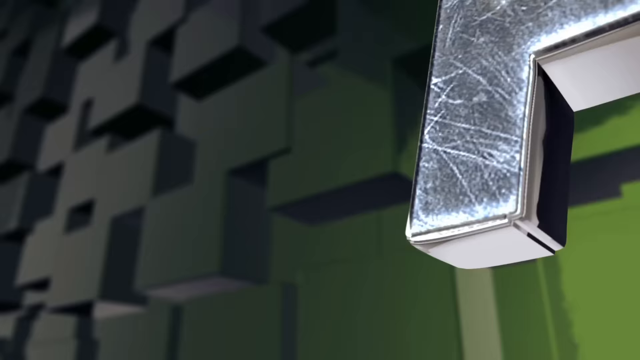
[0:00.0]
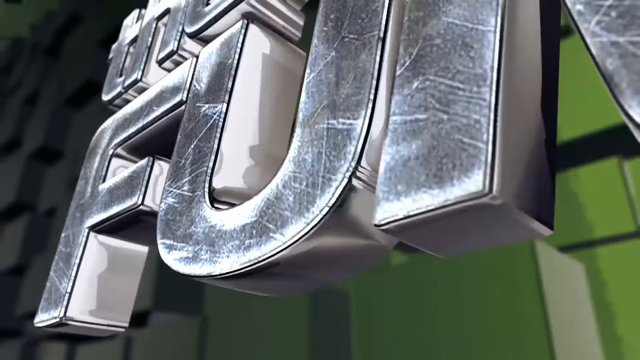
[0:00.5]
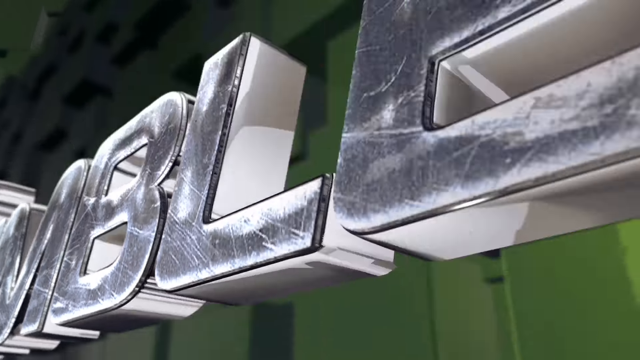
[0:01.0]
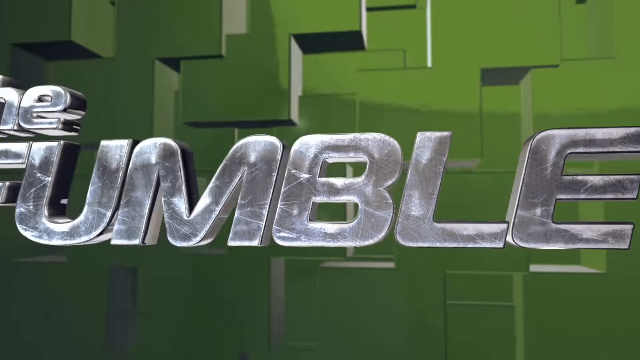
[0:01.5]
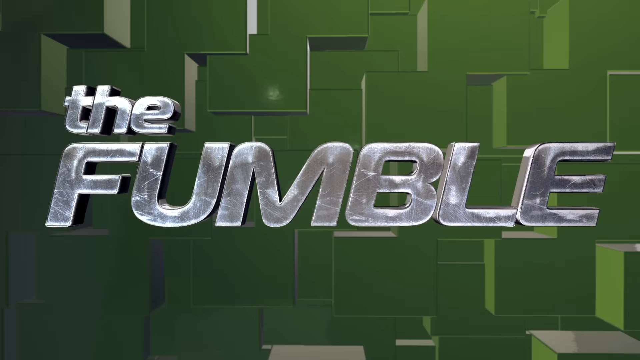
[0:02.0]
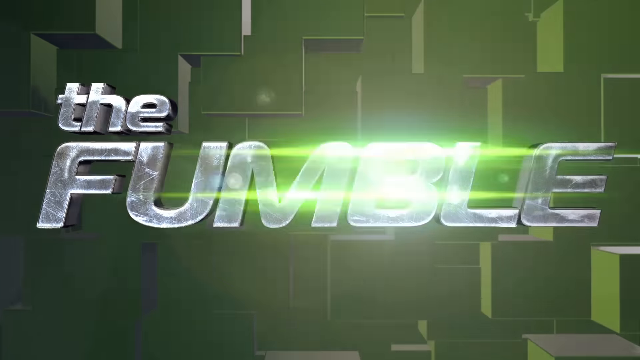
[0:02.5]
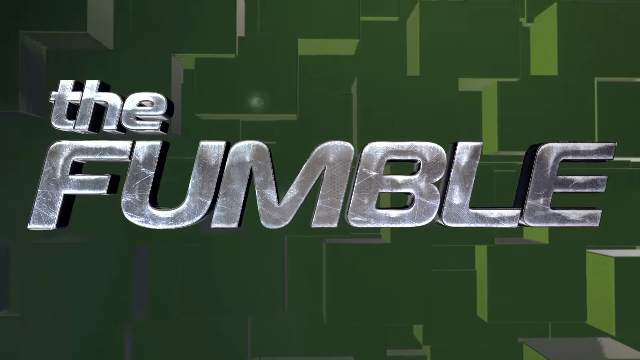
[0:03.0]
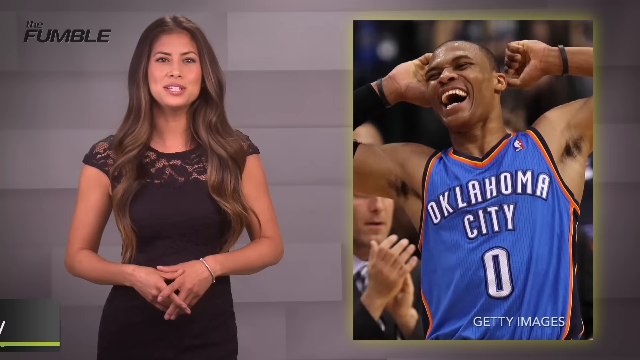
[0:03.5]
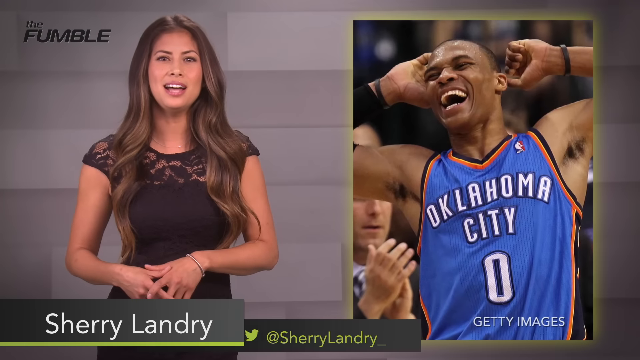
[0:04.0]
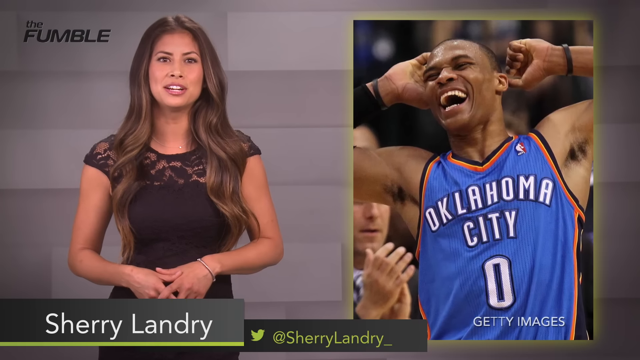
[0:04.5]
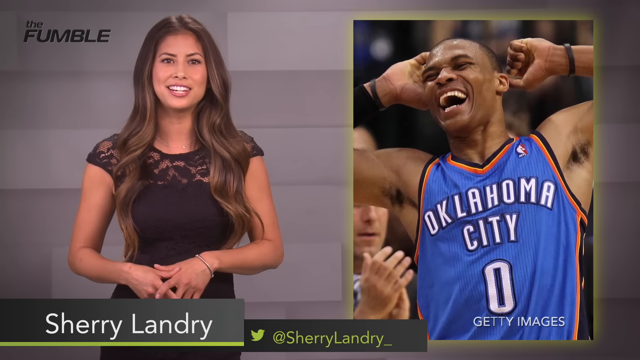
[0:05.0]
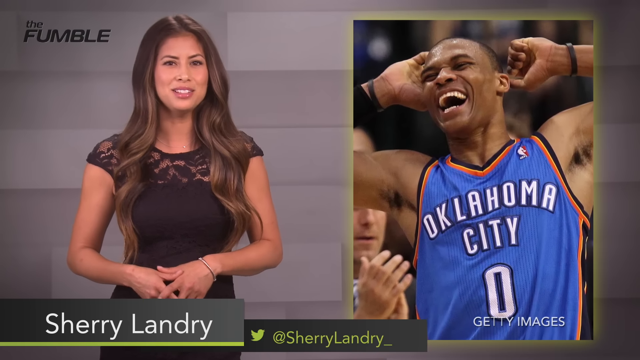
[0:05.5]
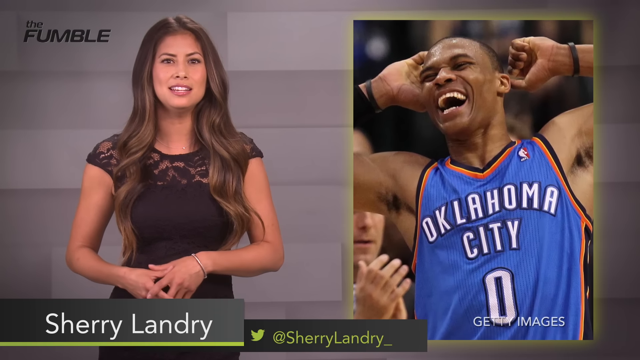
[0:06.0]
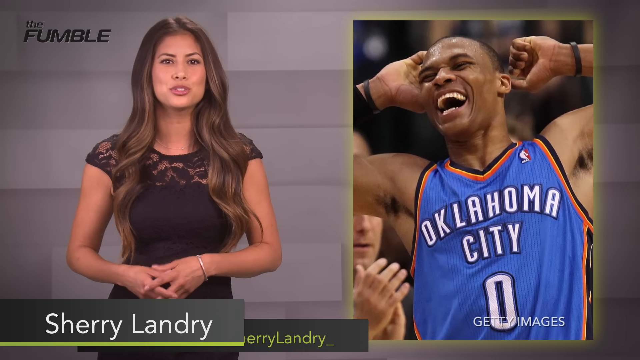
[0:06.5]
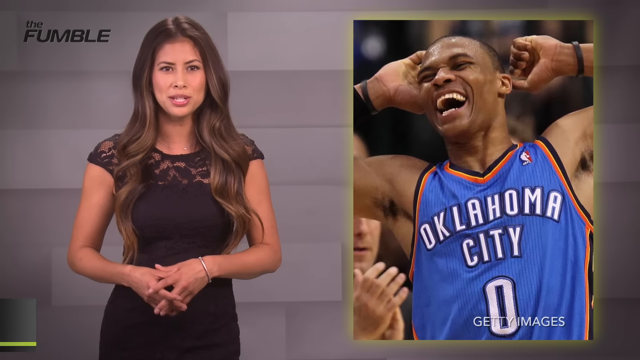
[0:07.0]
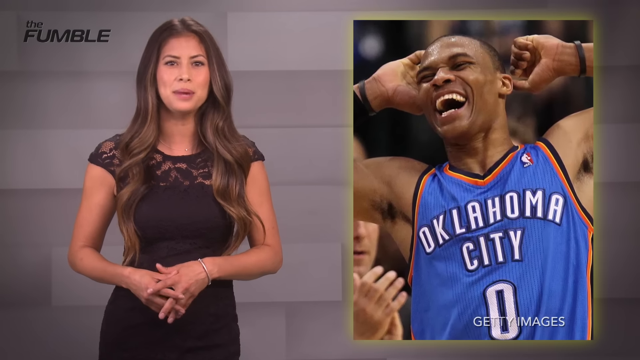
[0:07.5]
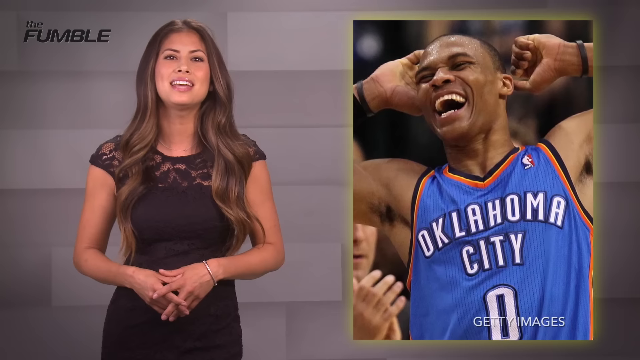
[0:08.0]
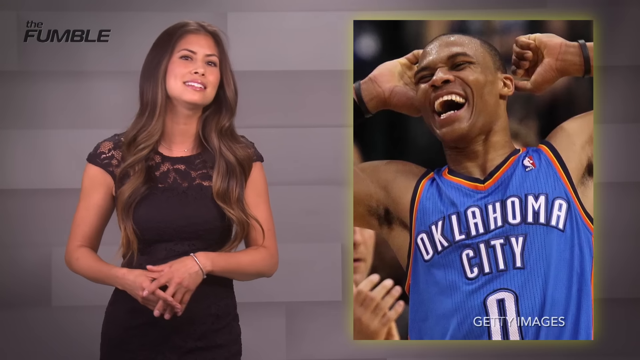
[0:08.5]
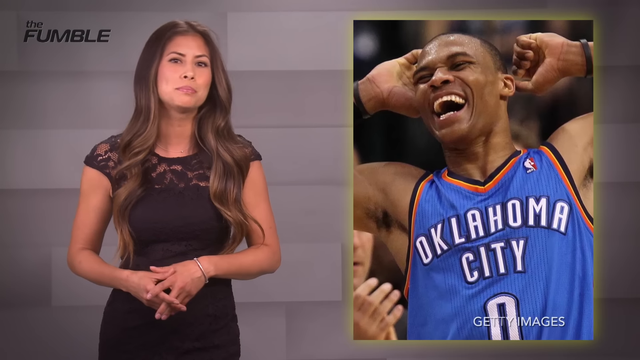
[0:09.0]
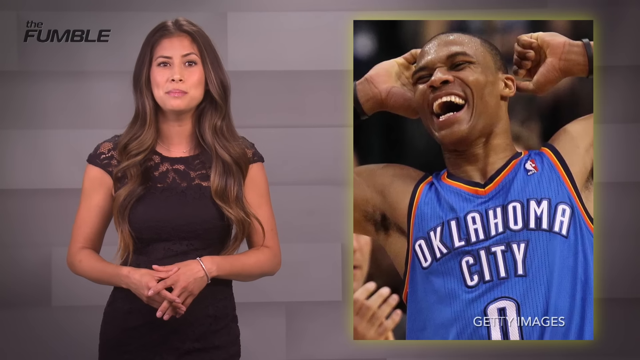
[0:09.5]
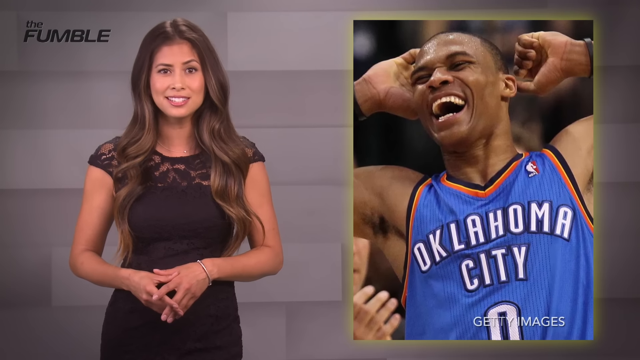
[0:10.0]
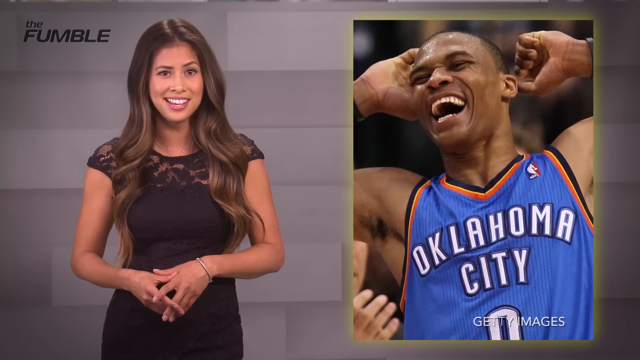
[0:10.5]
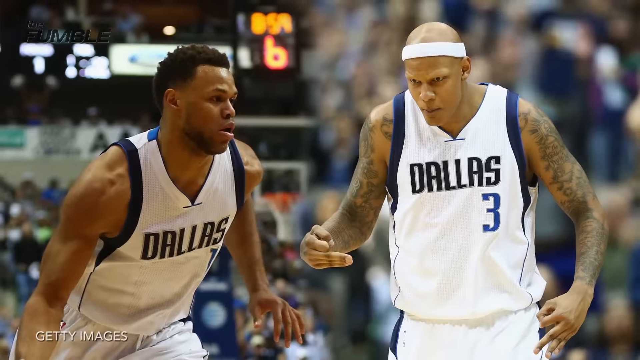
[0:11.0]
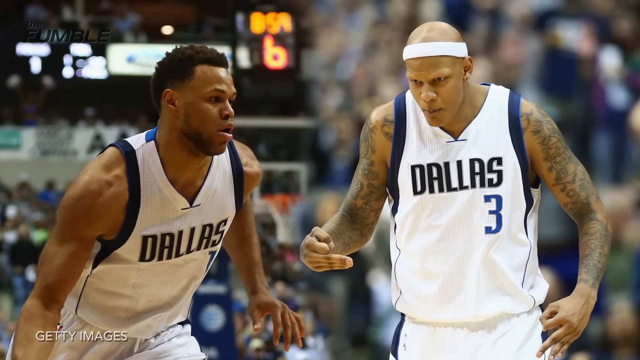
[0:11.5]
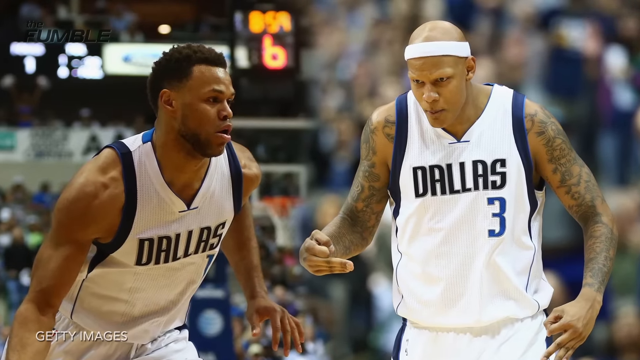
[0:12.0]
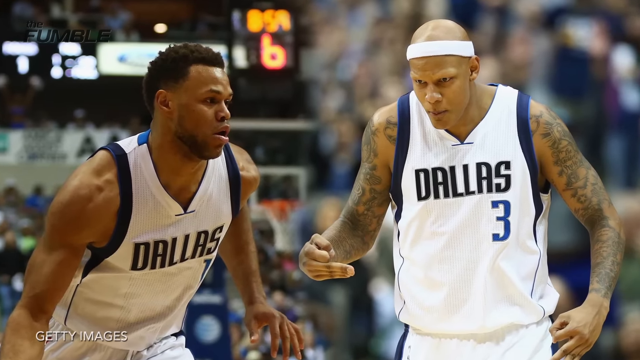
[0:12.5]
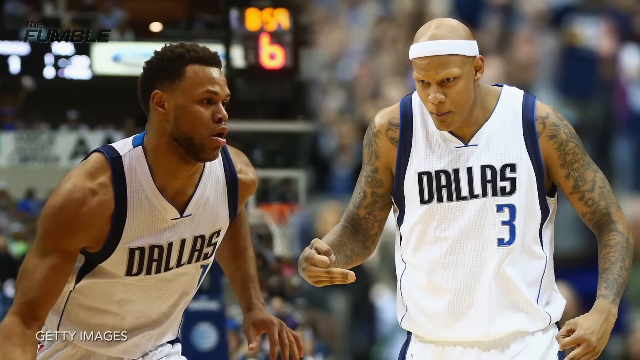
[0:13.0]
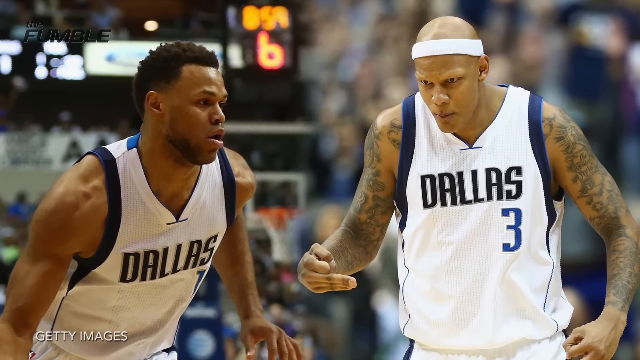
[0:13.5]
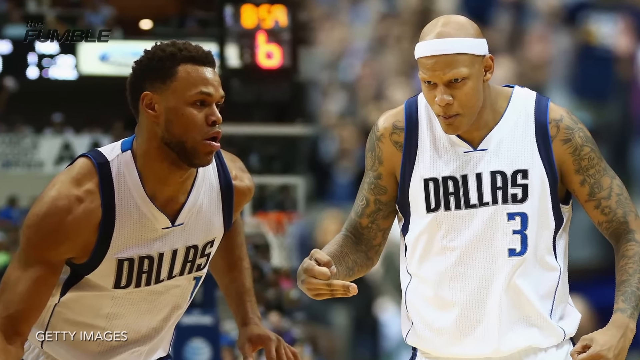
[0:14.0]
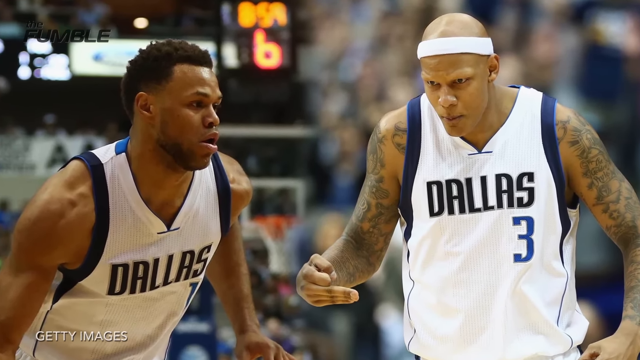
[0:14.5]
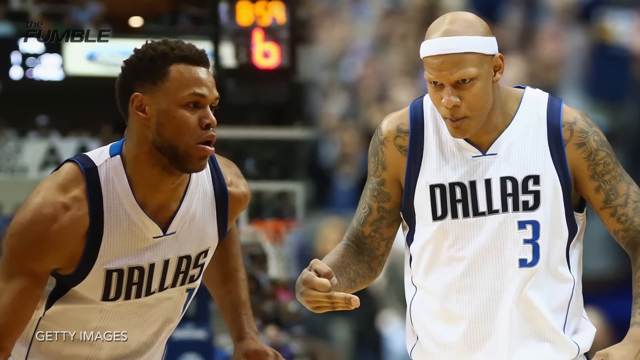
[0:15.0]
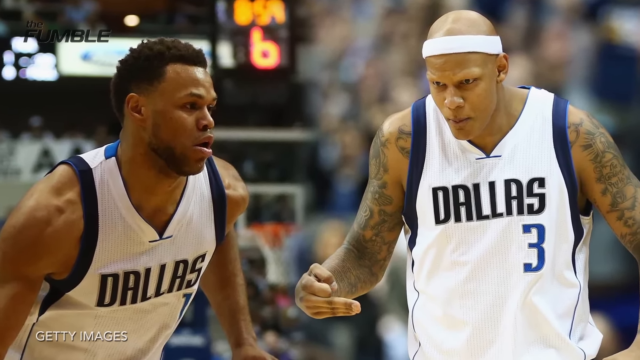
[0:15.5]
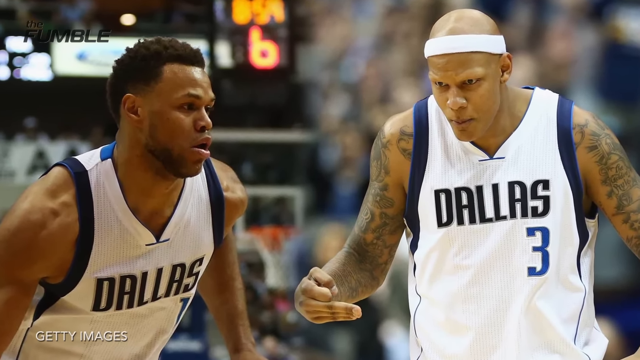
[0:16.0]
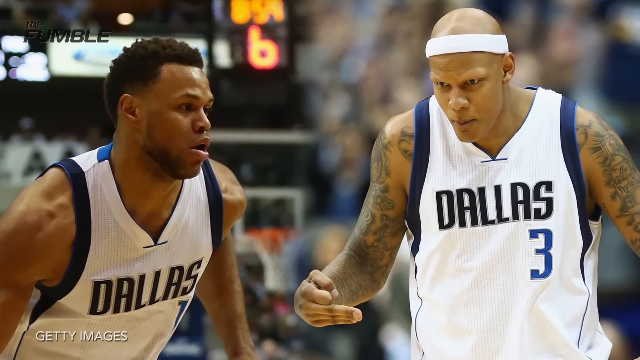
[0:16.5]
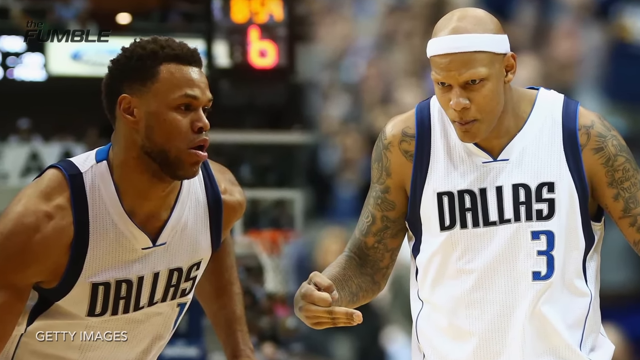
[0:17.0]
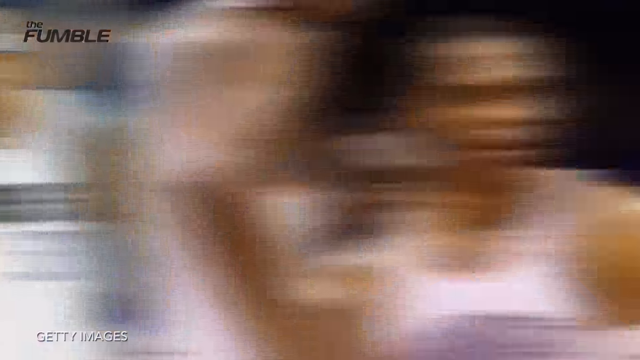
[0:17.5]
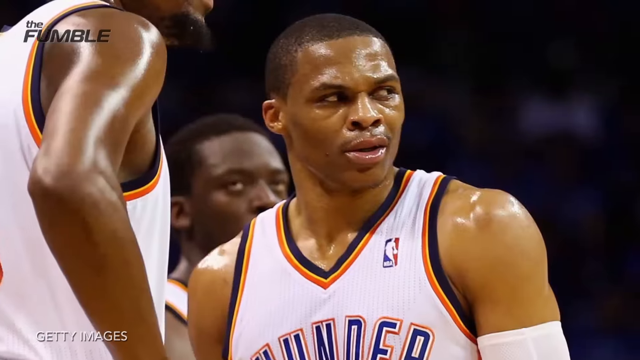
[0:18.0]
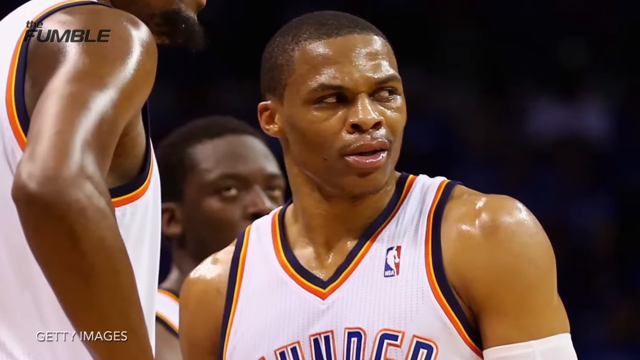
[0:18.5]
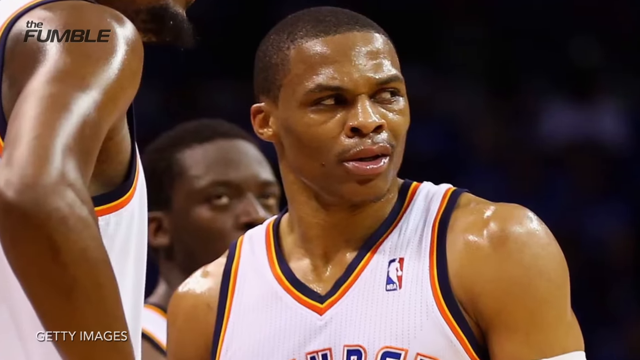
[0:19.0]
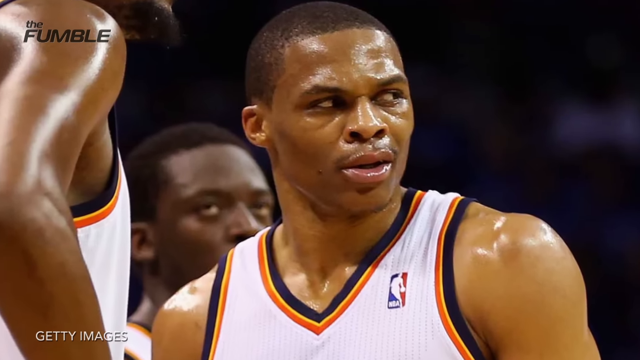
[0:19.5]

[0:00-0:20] The on-screen title reads "Russell Westbrook's pre-game dance." The video looks like a sports TV show. A woman commentator is on the left side of the screen and a man in a blue Oklahoma City basketball uniform is on the right. Interspersed with these are images of two different players in white Dallas uniforms. The show's name appears to be The Fumble, and the commentator's name appears to be Sherry Landry. Nothing clearly about a pre-game dance is visible yet, though something looks like it could be. The show is probably covering a game between Oklahoma City and Dallas, possibly with the pre-game dance as the headline.